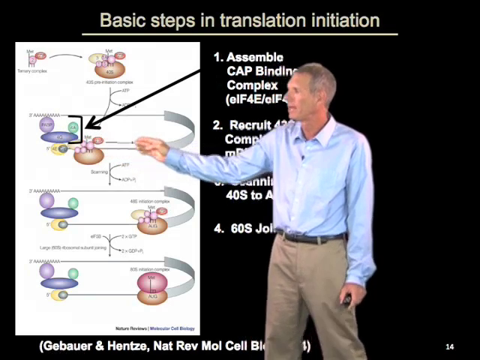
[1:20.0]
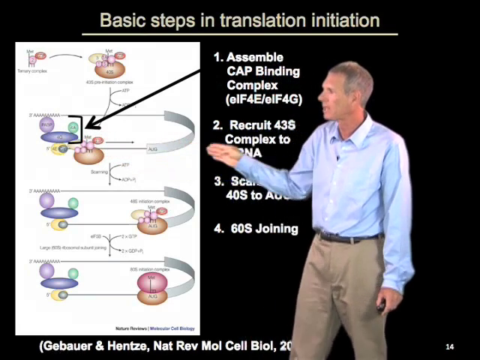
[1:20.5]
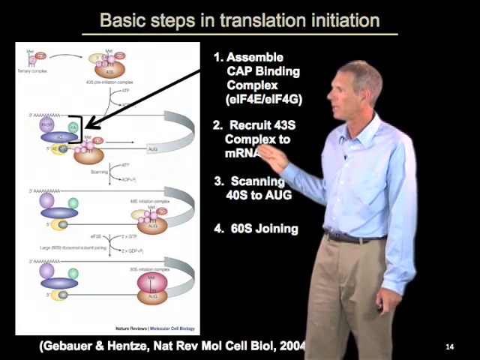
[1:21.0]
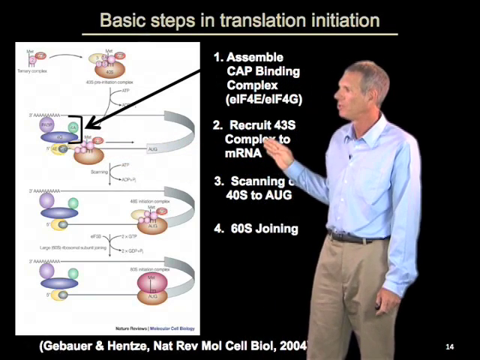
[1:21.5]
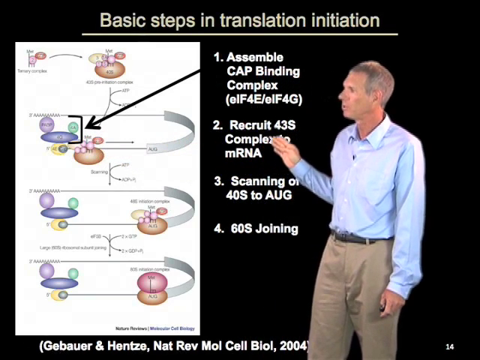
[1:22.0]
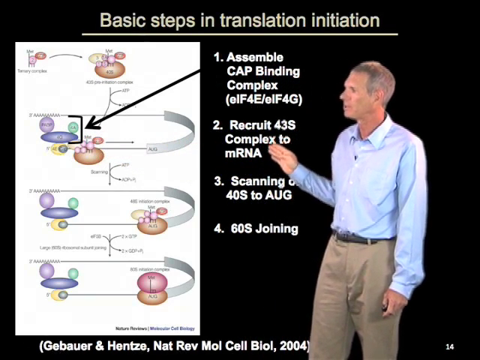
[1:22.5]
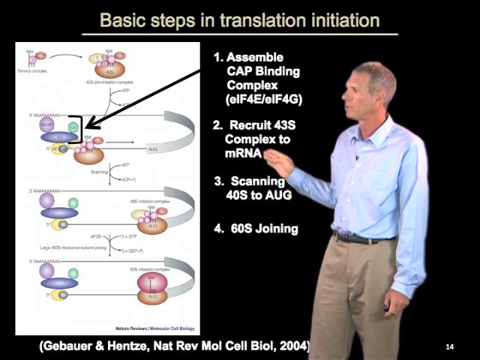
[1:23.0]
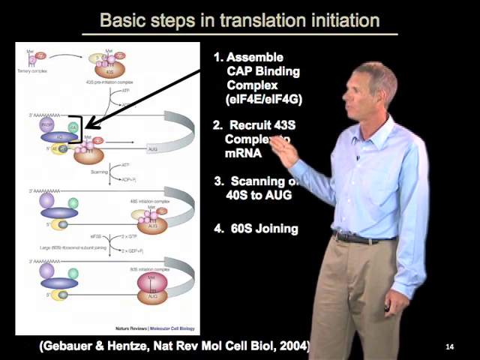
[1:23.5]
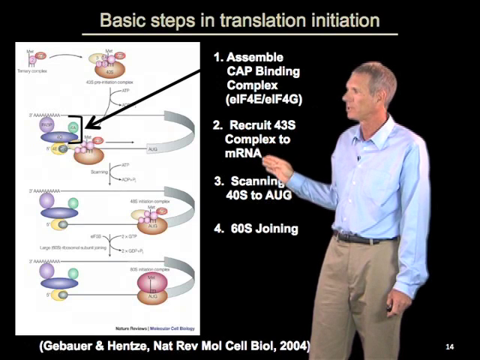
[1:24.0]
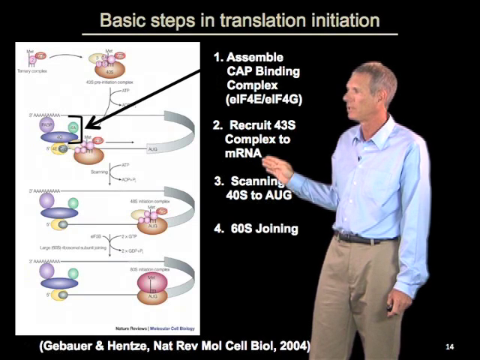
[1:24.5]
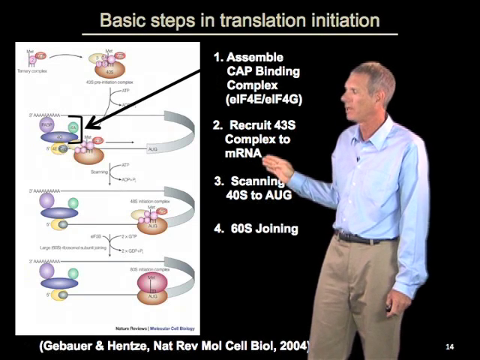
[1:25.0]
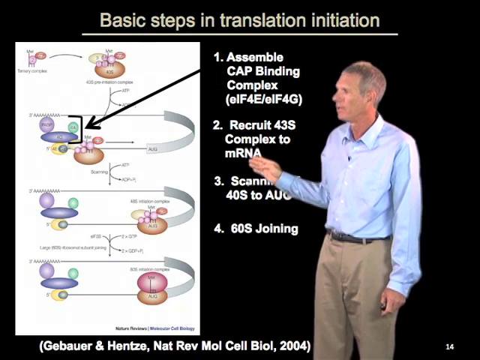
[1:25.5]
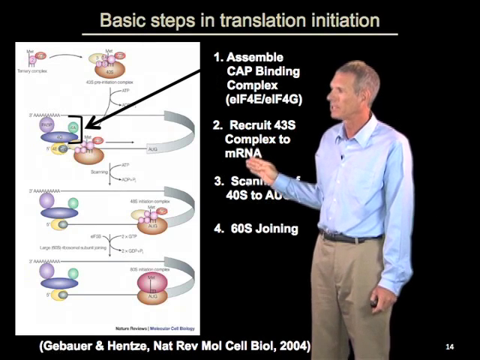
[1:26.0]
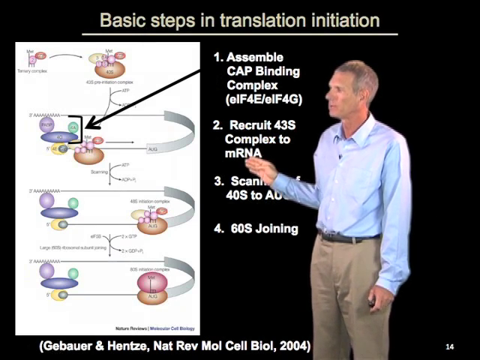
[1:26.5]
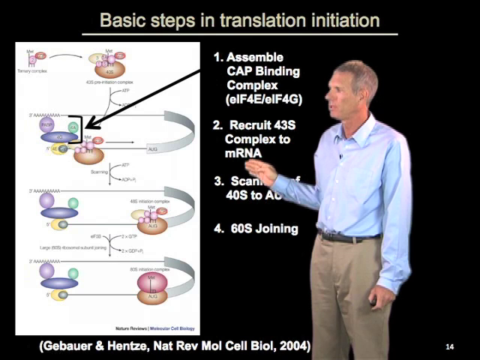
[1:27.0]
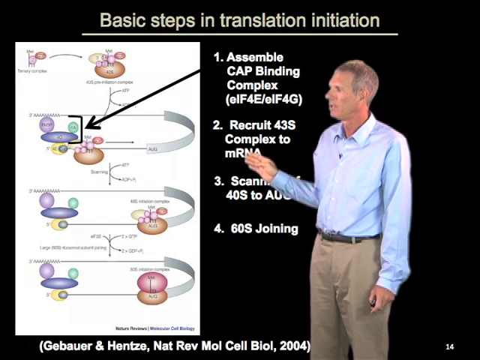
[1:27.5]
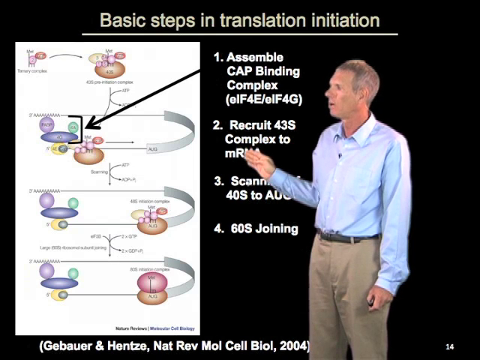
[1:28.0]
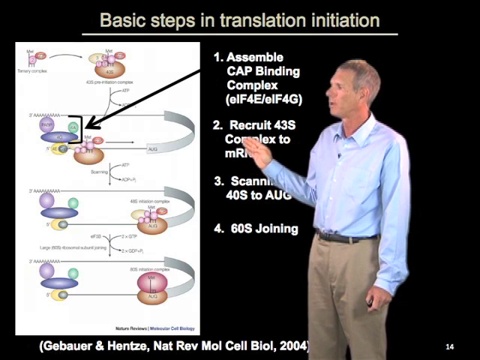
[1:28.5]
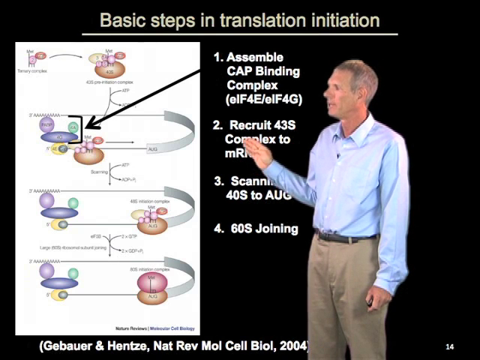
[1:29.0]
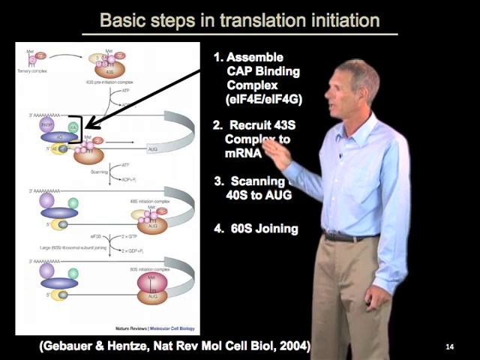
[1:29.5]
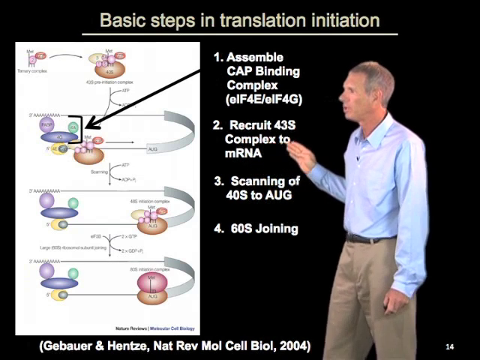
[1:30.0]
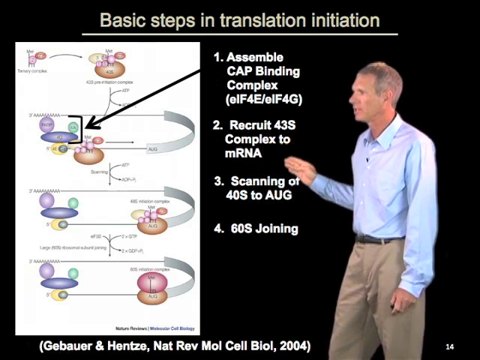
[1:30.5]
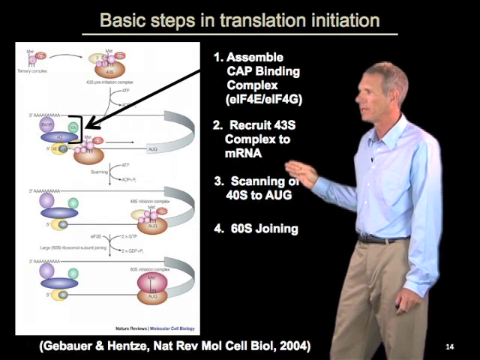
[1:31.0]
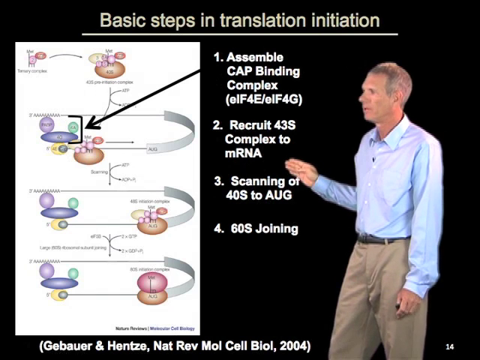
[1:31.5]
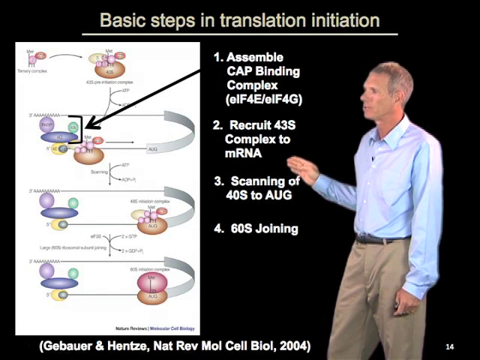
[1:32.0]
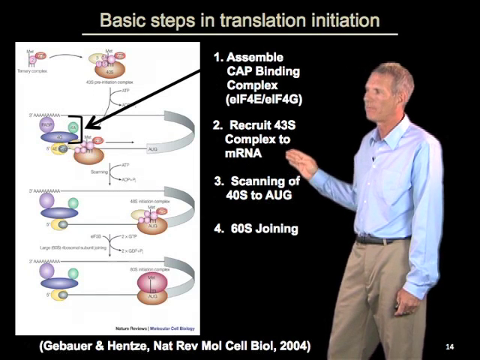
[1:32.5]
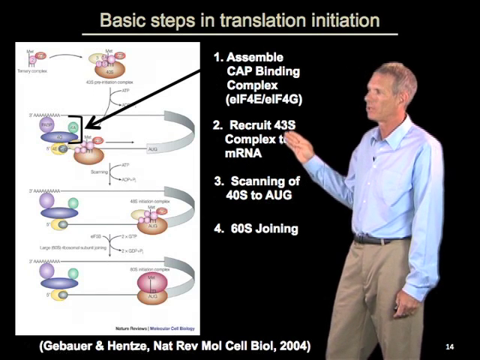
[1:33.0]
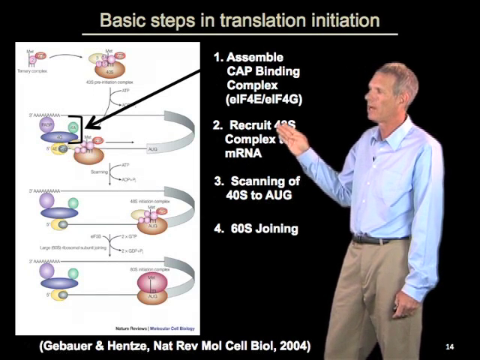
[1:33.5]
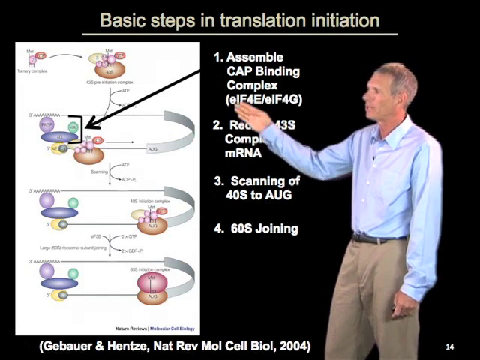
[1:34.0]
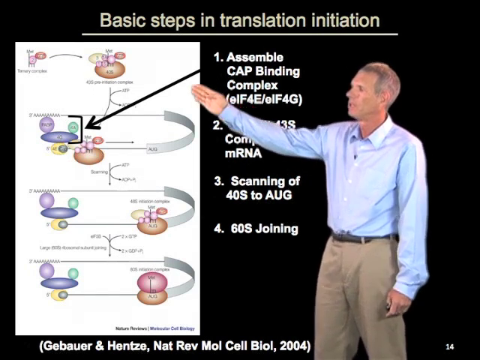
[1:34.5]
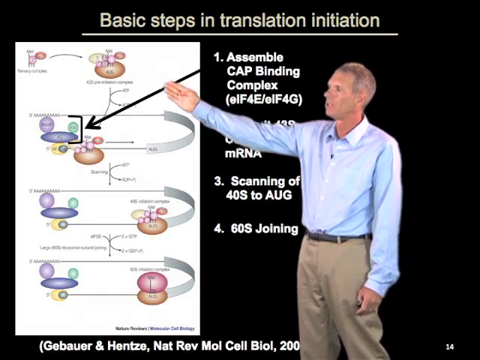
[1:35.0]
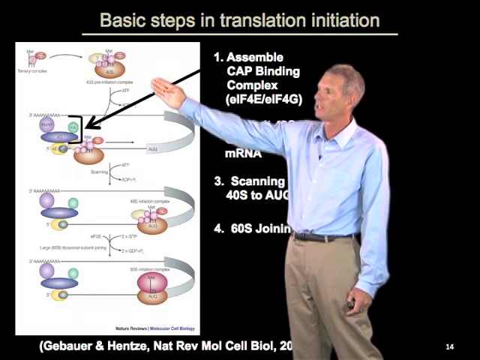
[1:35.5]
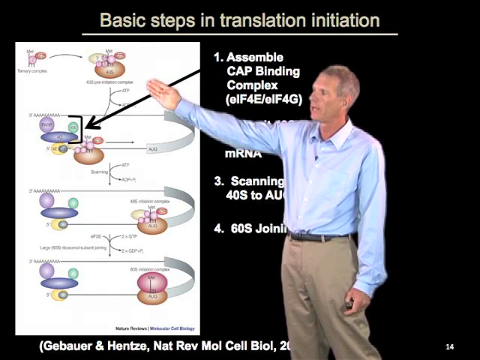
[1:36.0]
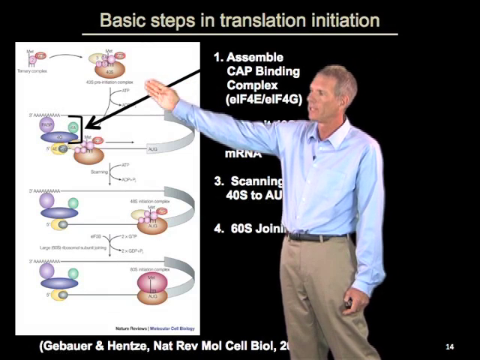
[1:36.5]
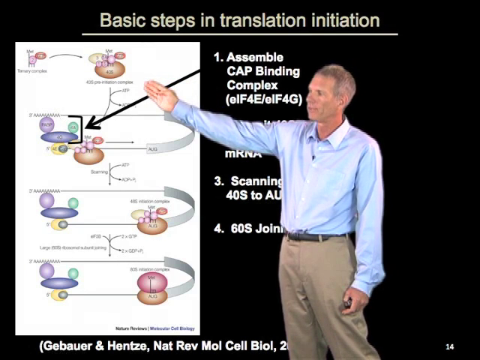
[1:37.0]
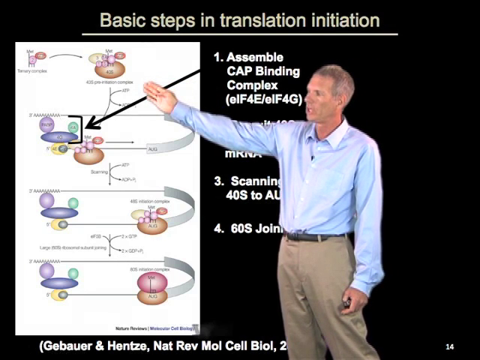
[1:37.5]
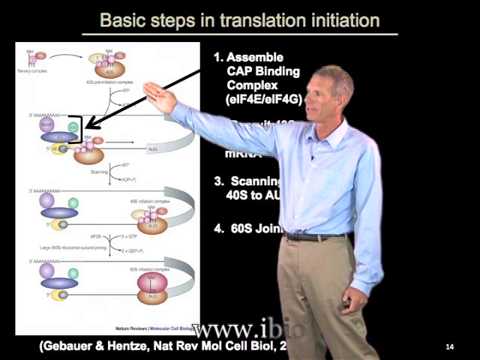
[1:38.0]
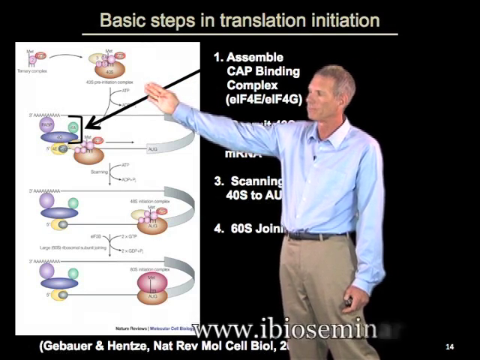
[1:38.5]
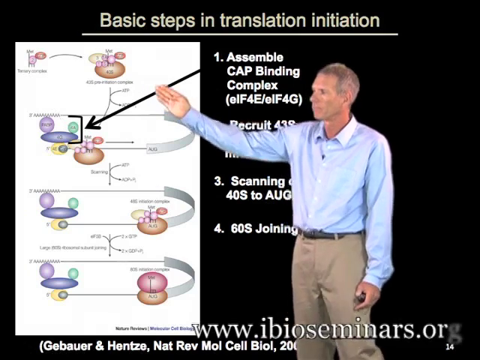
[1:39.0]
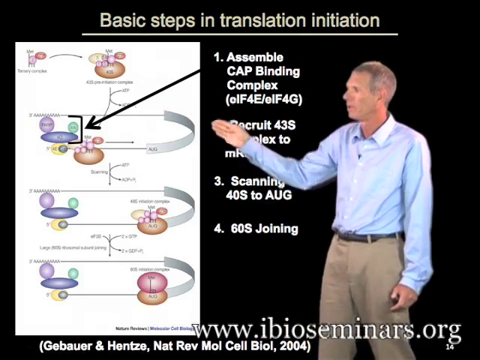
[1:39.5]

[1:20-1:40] The chart of the basic steps in translation initiation is shown with a man beside it: a white man with somewhat gray hair, wearing khaki pants, a belt and a long-sleeve light blue shirt. He goes through the four steps step by step. Step one is "assemble cap binding complex," followed by something in parentheses; step two is "recruit 43S complex to mRNA"; step three is "scanning 40S to AUG"; and step four says "60S joining." There is a picture illustrating the steps.